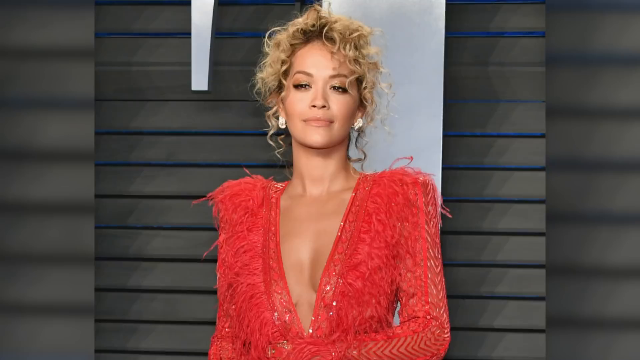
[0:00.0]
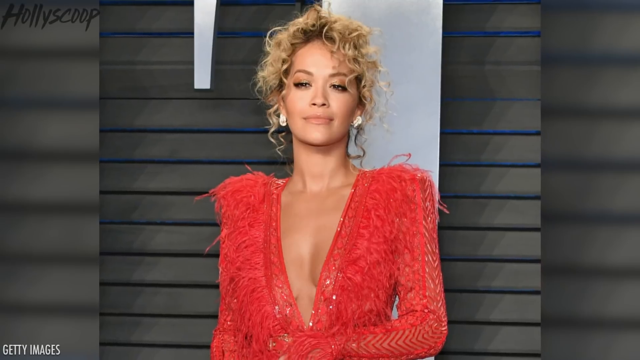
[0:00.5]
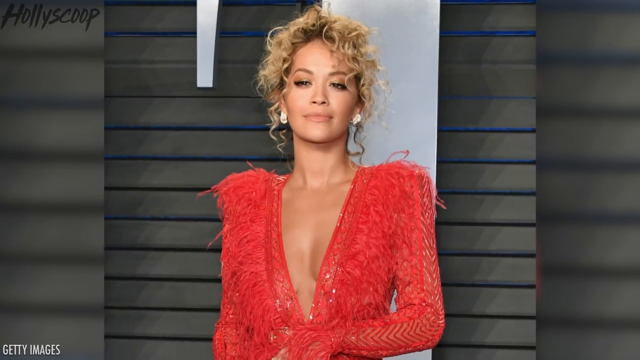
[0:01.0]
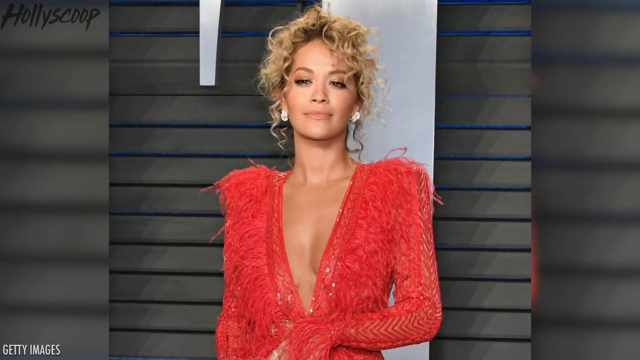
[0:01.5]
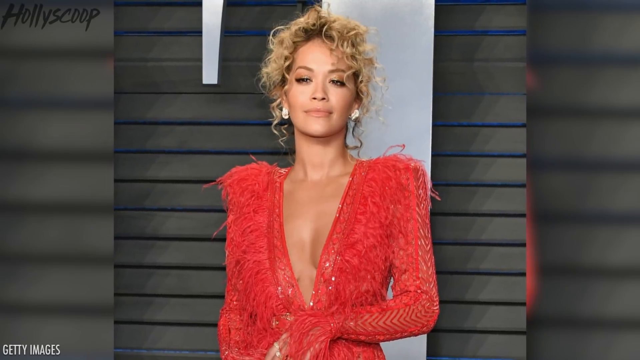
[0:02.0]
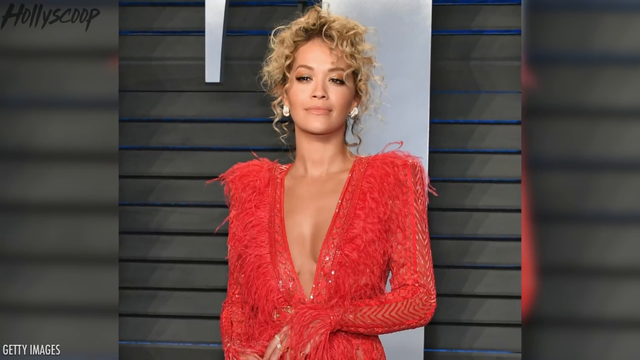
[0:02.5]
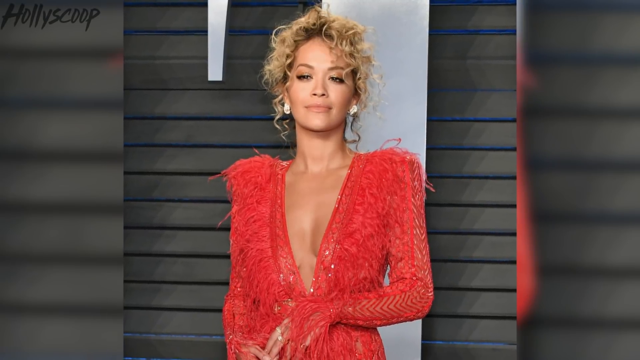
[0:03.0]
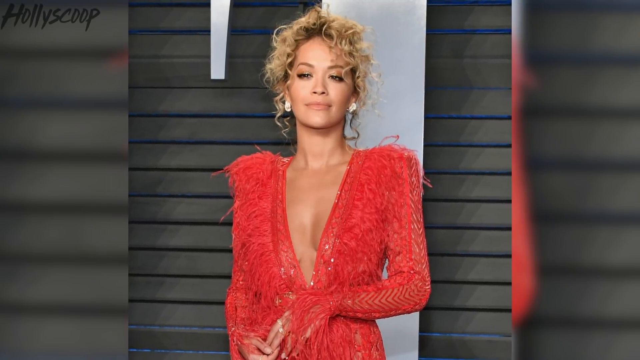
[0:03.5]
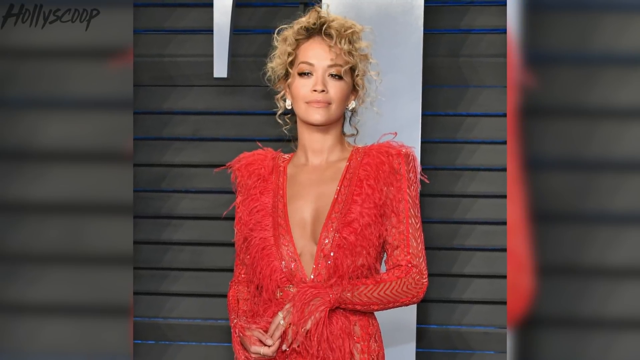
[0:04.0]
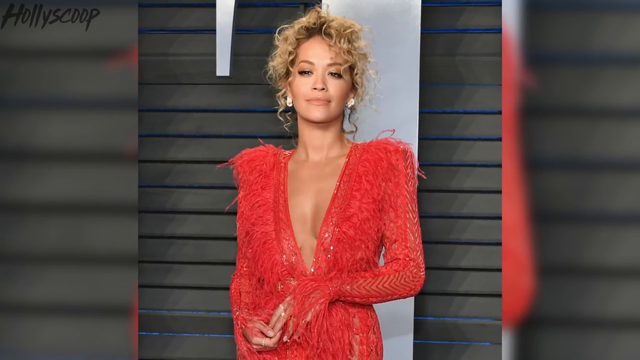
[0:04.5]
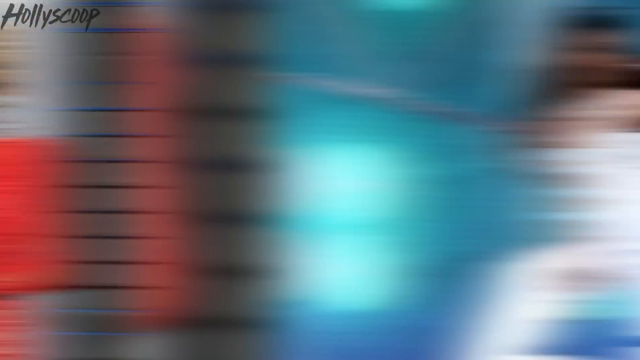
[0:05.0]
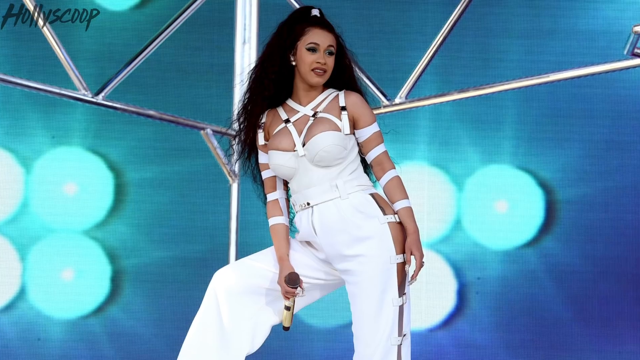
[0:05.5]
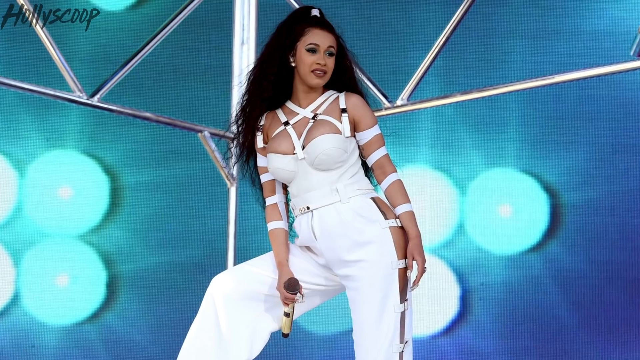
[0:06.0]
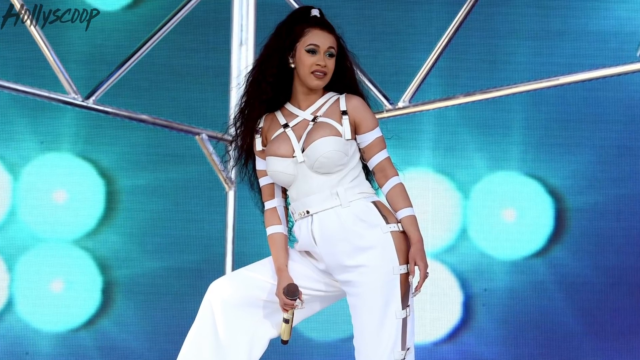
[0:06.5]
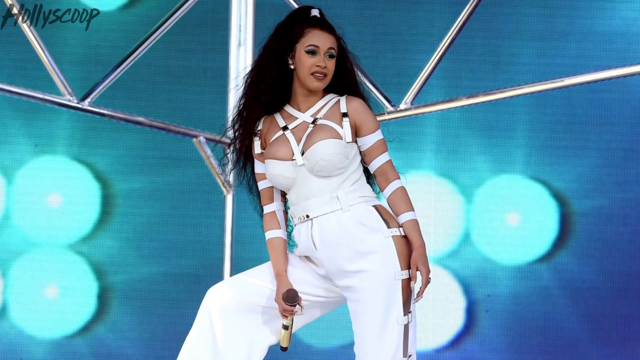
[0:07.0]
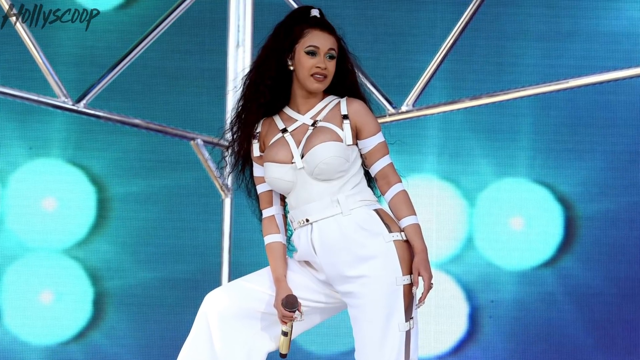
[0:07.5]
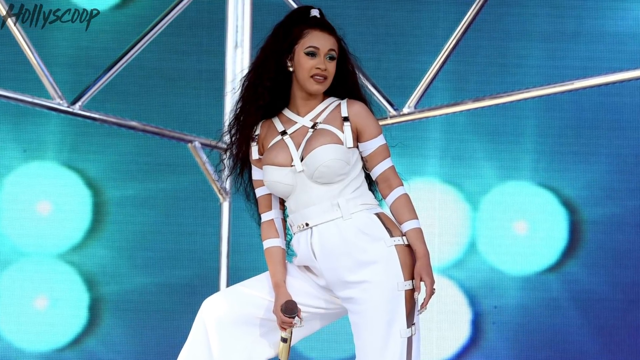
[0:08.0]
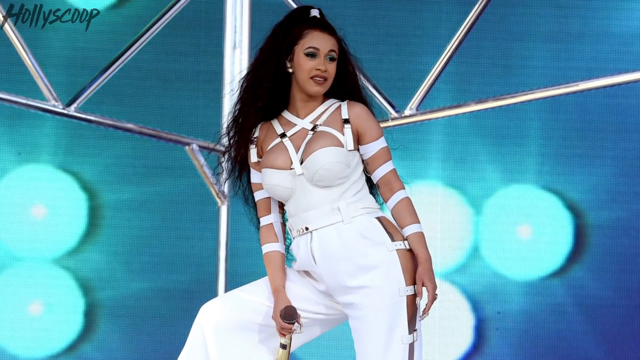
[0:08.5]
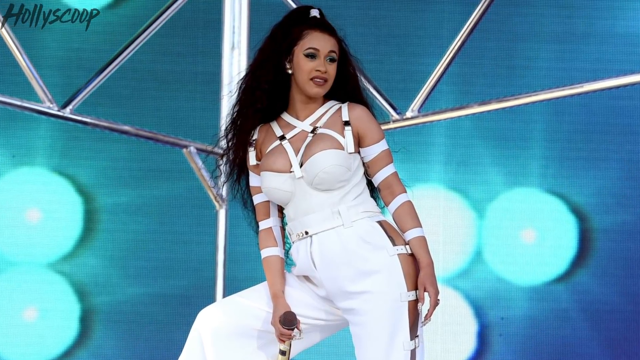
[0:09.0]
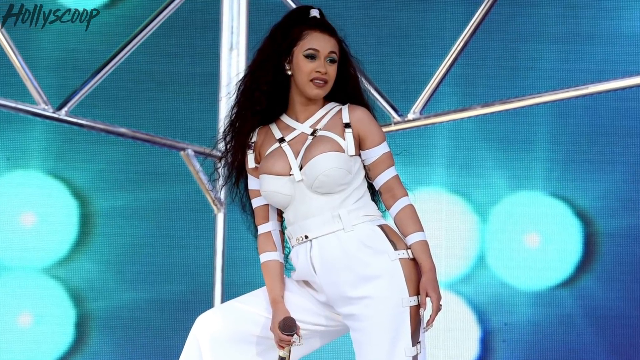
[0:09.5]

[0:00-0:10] The video opens on celebrity Rita Ora in a red feathered dress. The dress is made mostly of a red feather-type pattern and has a very deep plunging neckline that runs past her chest, with her breasts visible on either side of the big V. She is standing there with wavy blonde hair. The camera zooms in to show rapper Cardi B in a white ensemble; she appears to be on a stage with a blue-to-teal background and some metal bars set up as support structures. Cardi B wears white pants and a white bustier top with many straps radiating from the chest, crossing her chest and neck and running down to her arms in a crisscross pattern. Her hair is in a large, very thick and full style behind her, almost like a lion's mane.